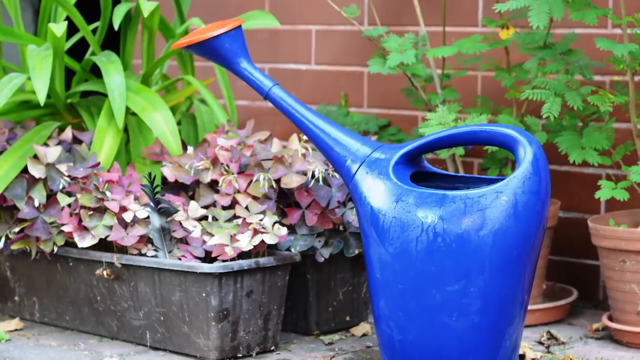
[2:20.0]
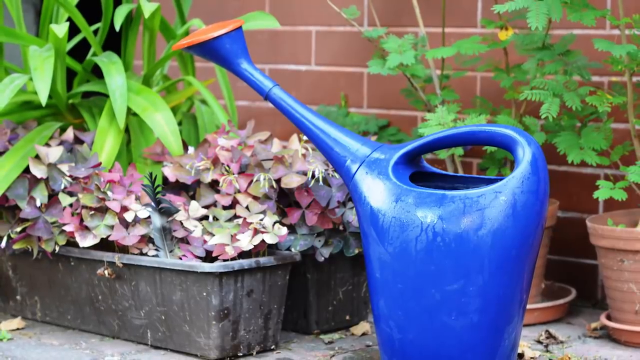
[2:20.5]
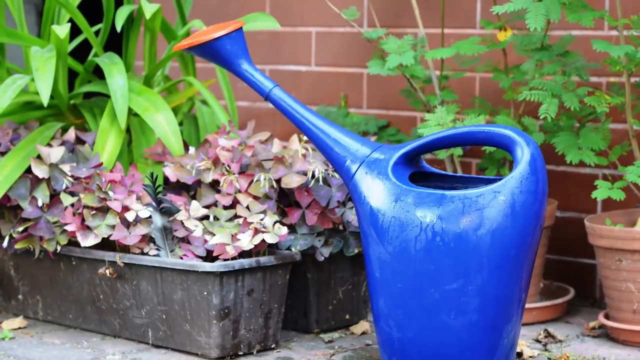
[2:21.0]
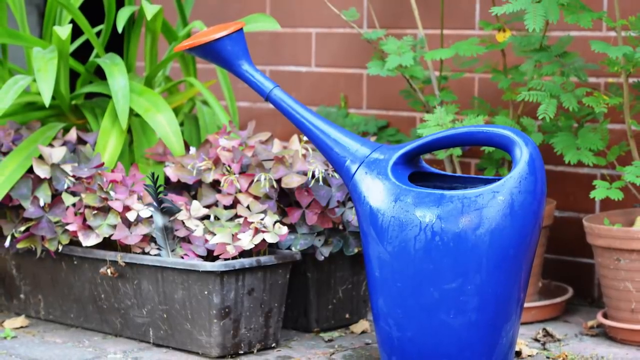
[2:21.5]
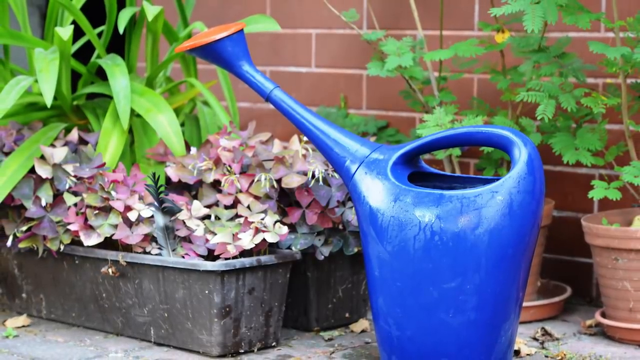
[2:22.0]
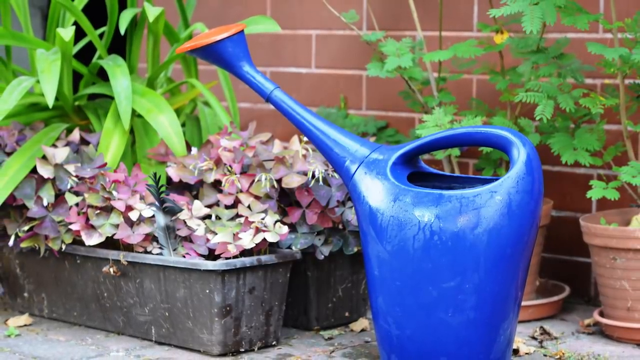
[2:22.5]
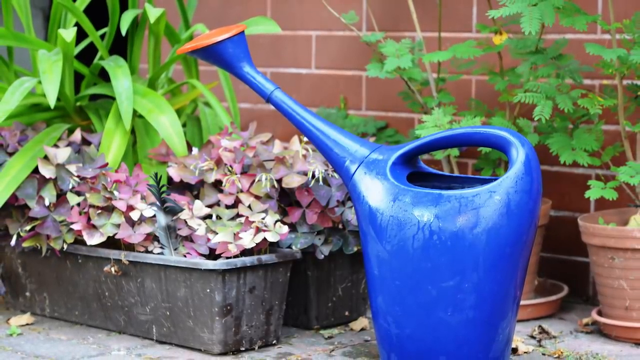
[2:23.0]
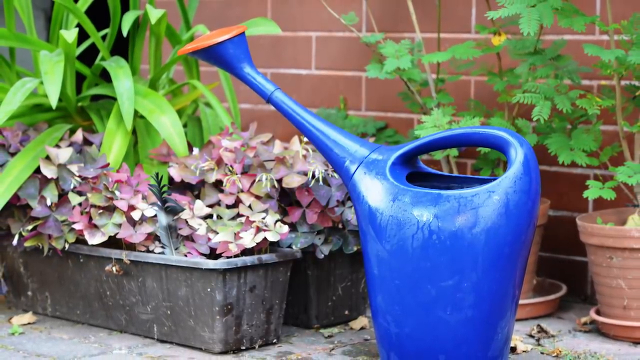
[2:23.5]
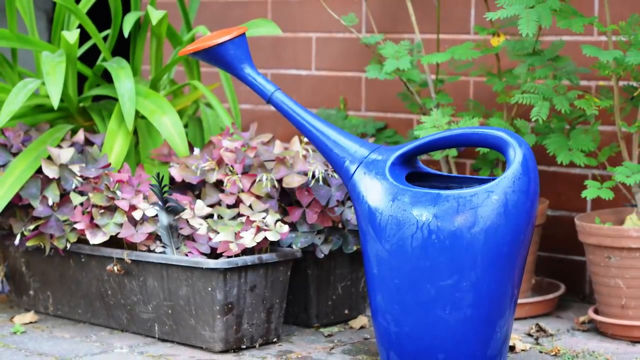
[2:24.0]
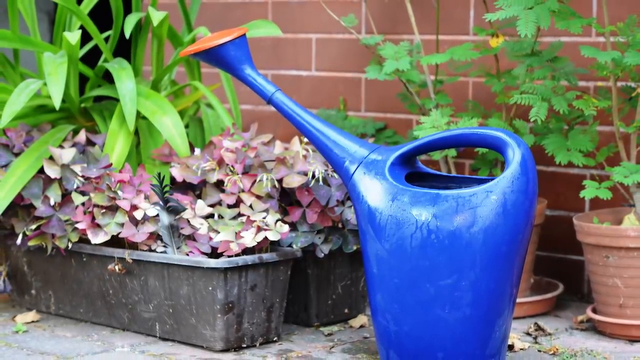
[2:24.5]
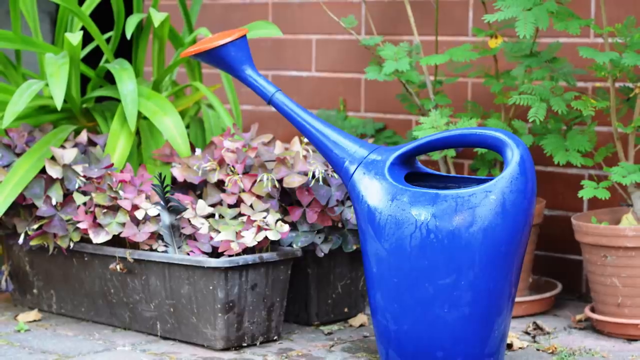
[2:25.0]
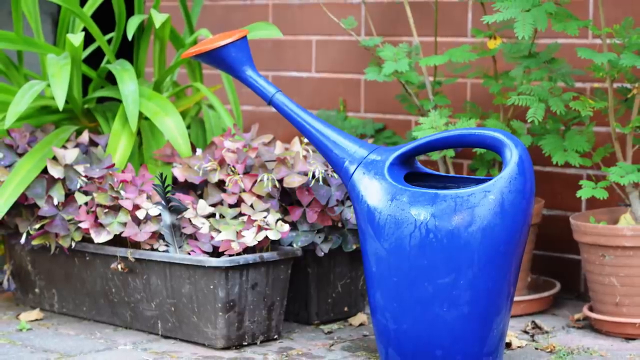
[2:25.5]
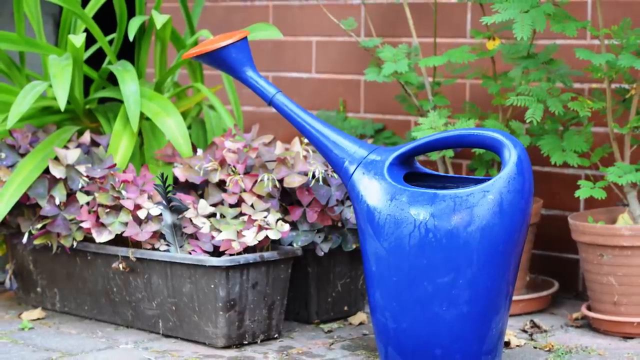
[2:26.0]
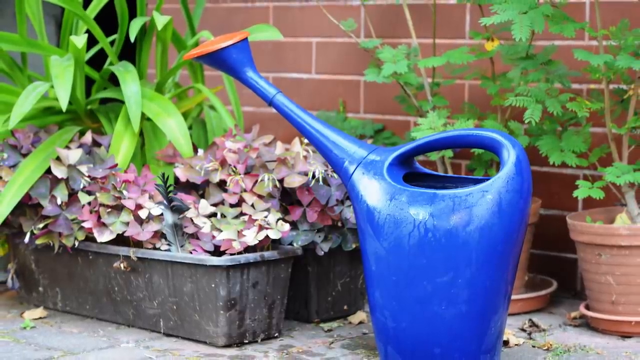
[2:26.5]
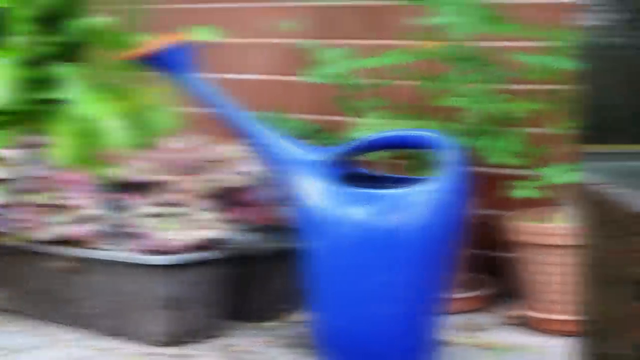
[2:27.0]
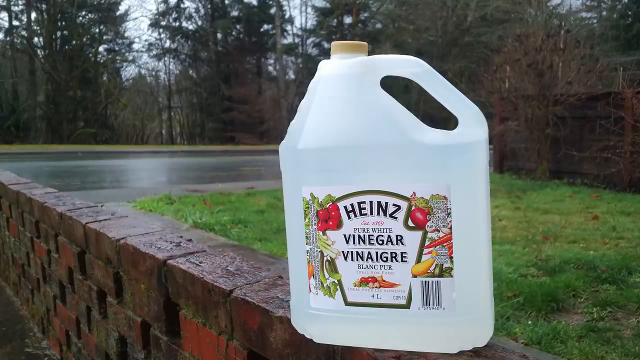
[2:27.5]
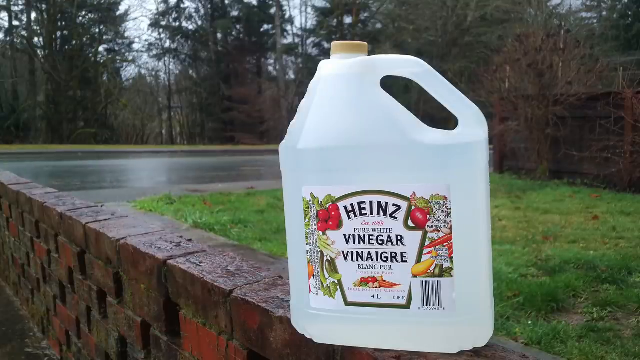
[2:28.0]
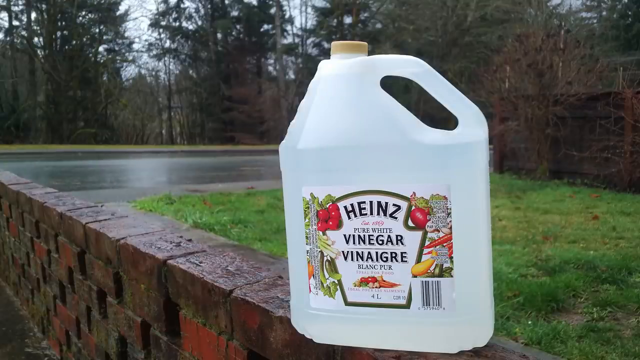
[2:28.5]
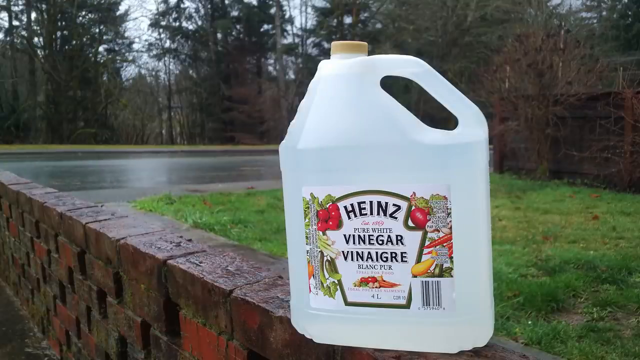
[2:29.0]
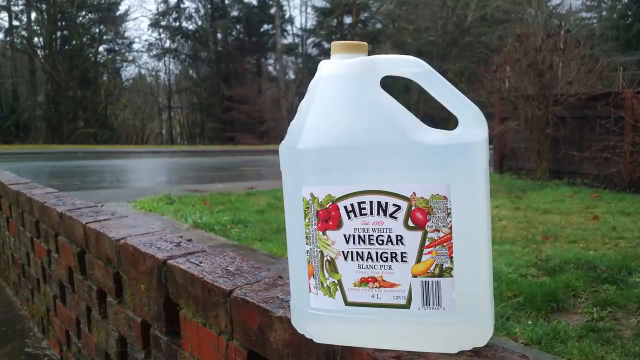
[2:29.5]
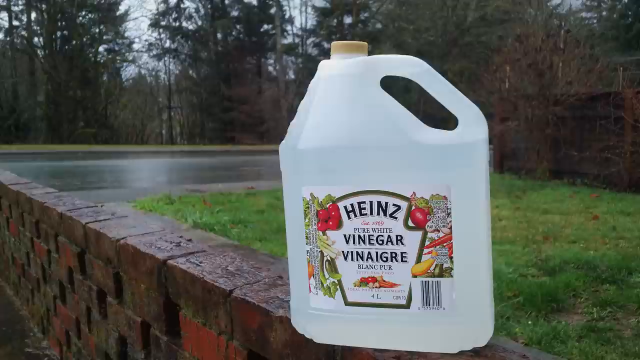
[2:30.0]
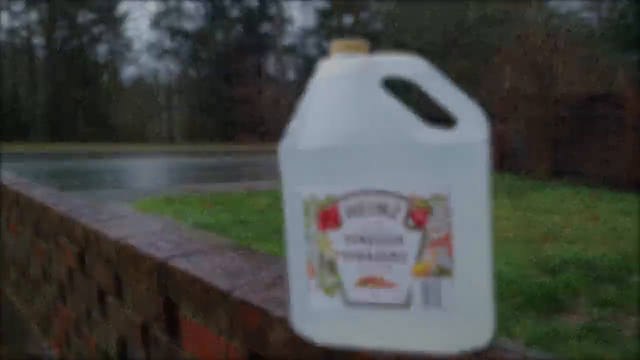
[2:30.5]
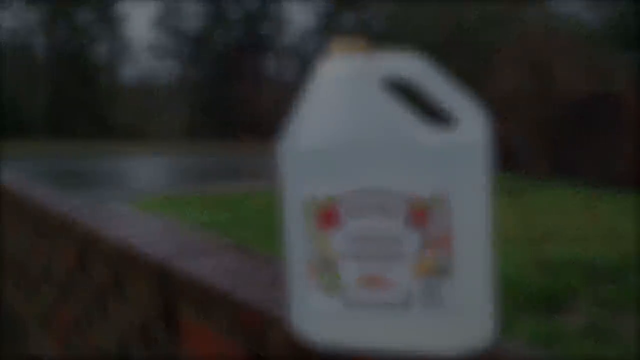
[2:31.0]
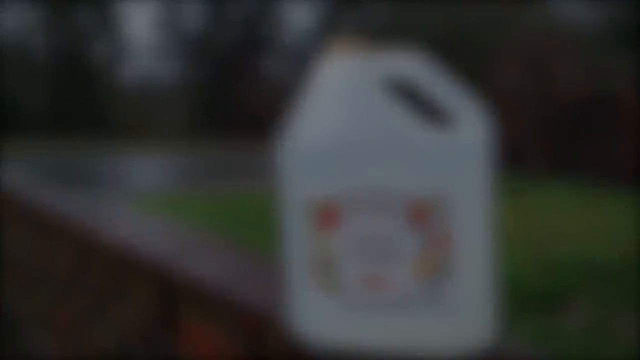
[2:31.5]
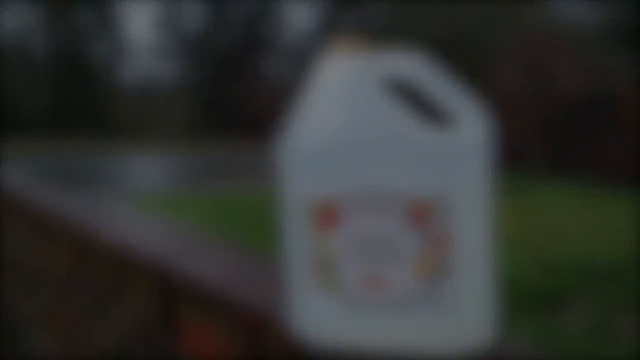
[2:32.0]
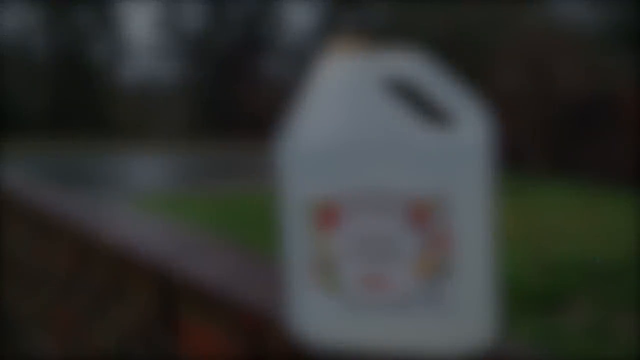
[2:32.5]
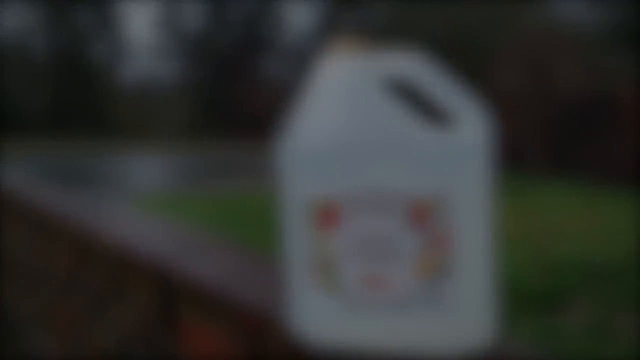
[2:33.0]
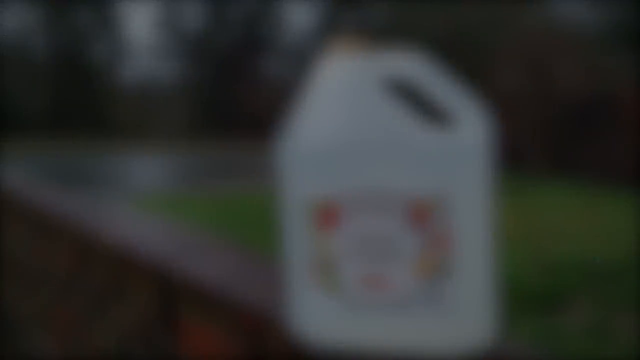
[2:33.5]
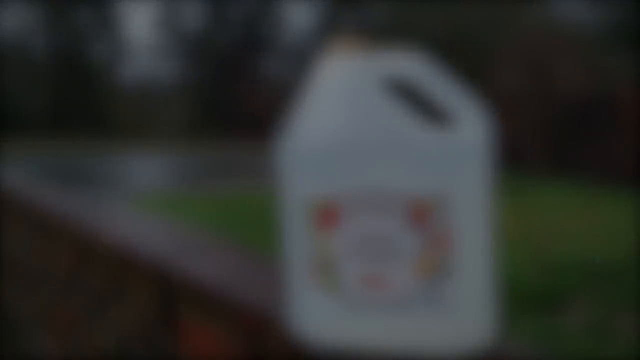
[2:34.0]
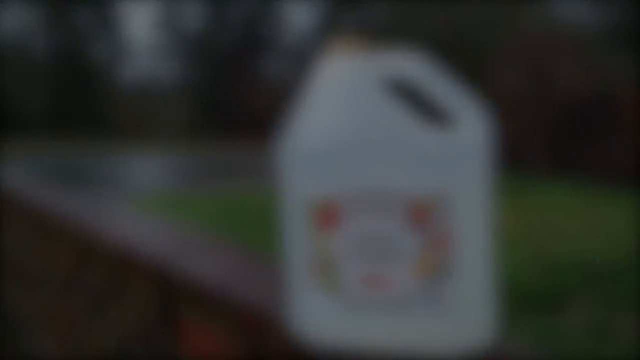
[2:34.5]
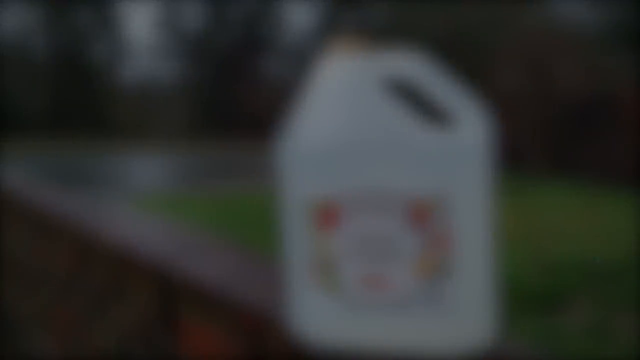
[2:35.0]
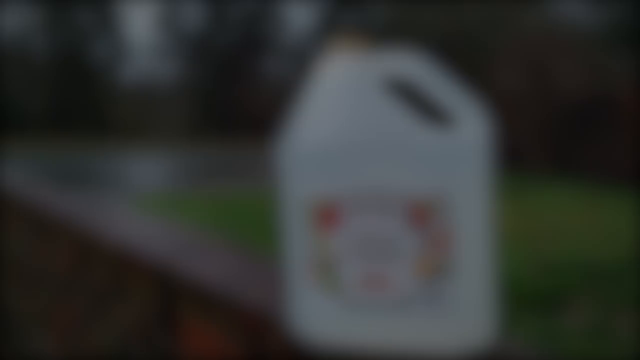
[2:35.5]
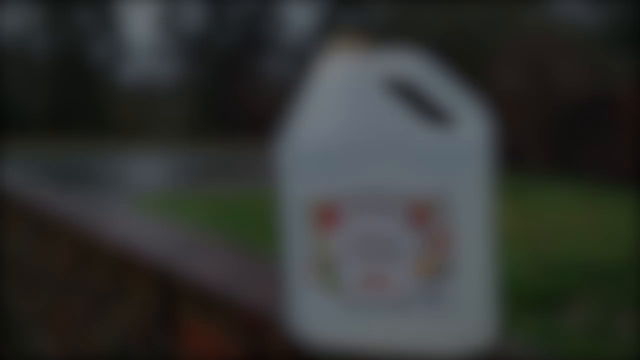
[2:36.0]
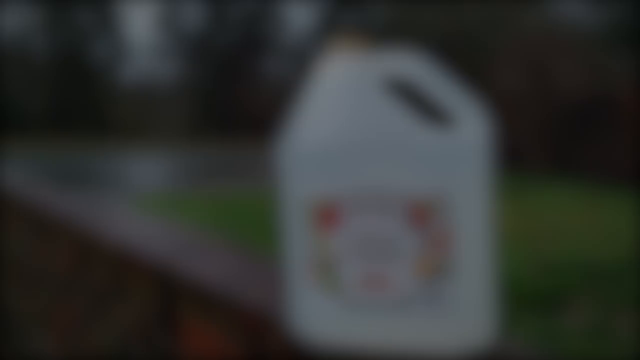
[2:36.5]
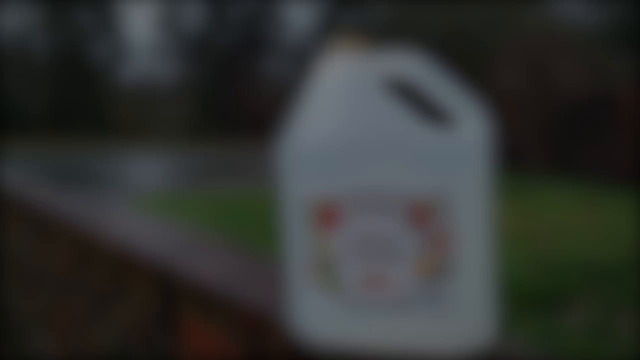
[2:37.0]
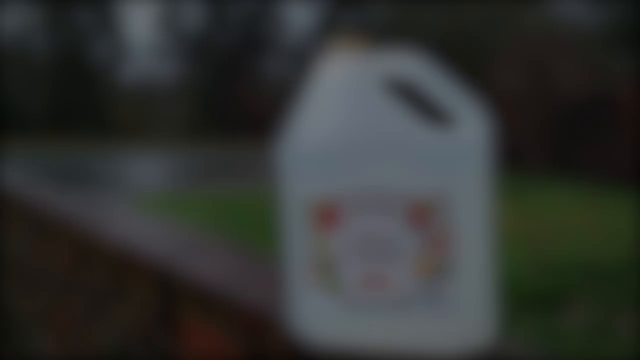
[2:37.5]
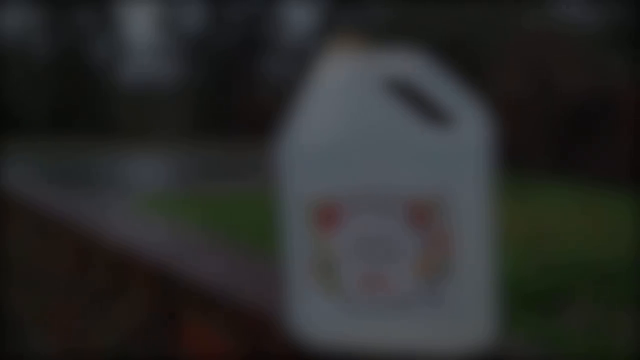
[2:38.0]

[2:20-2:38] The blue pot is being used to water the green and dark red plants around it. The blue watering pot appears to be soaked in water. The shot then cuts back to the see-through four-liter Heinz pure white vinegar bottle on top of the red brick wall, with green grass behind it. Behind the grass is a deep forest with tall green trees, and near the grass is a body of water. Numerous vegetables appear to be drawn on the front of the bottle.